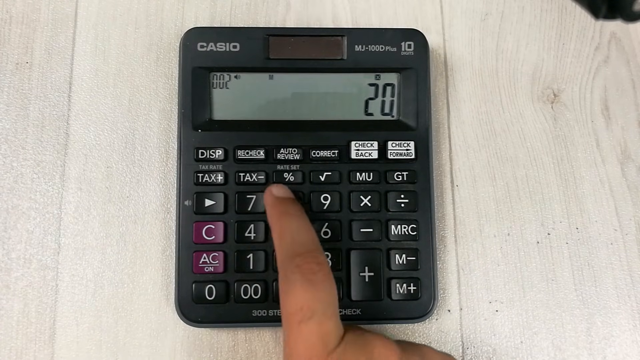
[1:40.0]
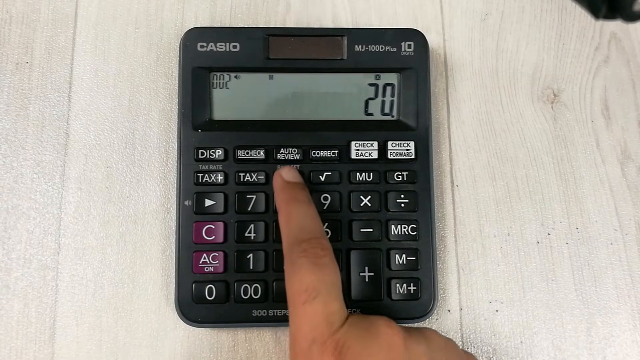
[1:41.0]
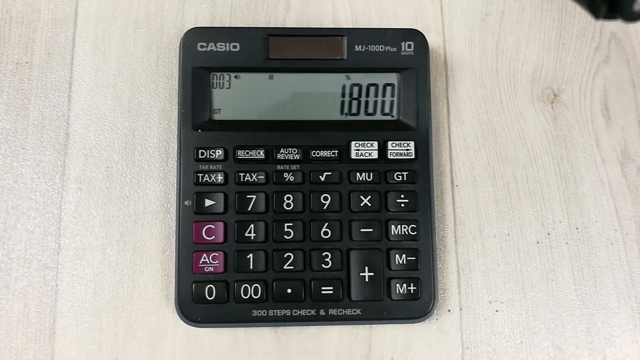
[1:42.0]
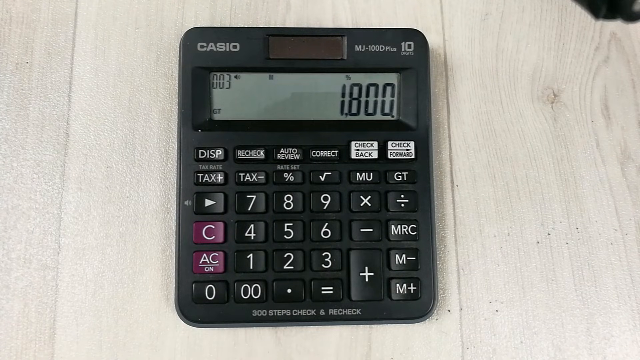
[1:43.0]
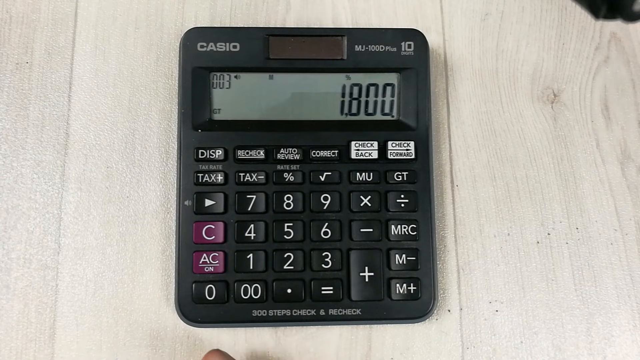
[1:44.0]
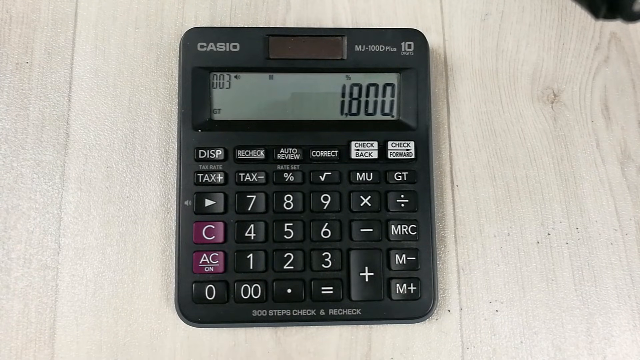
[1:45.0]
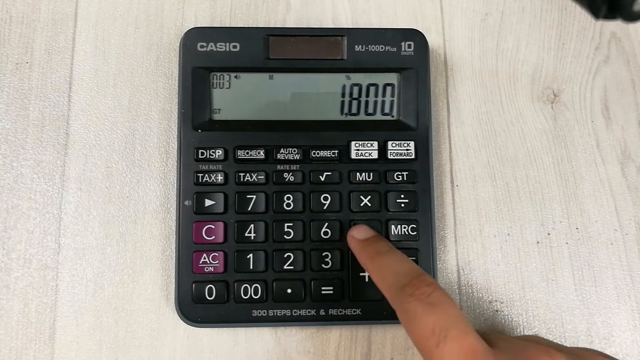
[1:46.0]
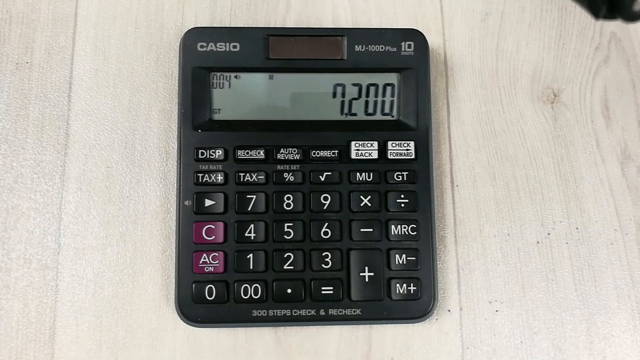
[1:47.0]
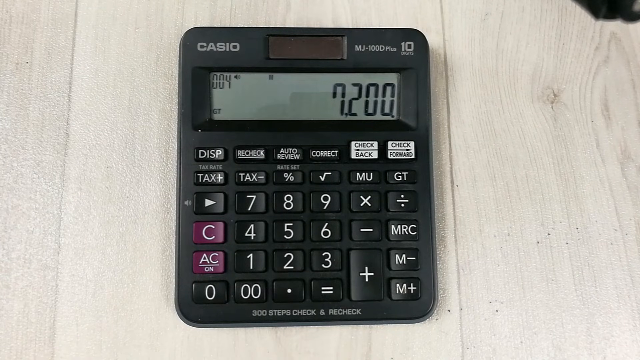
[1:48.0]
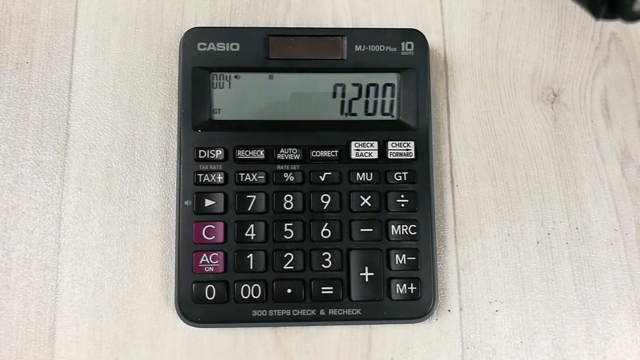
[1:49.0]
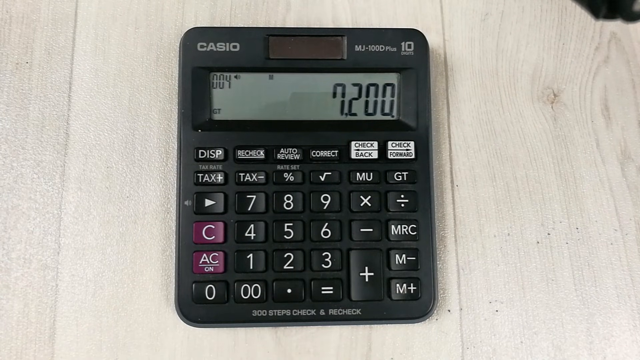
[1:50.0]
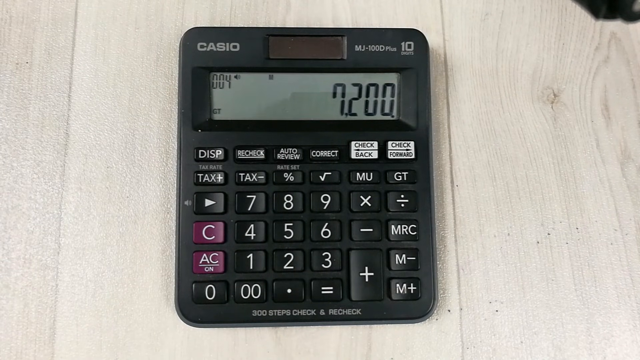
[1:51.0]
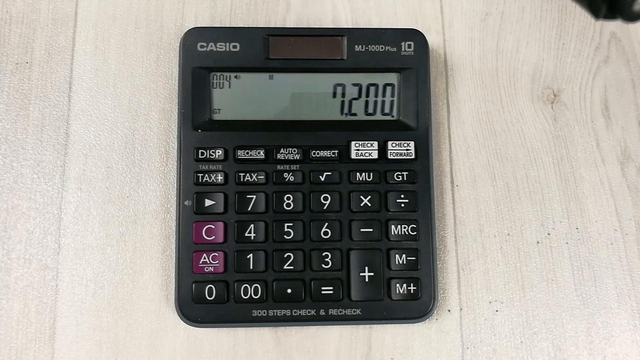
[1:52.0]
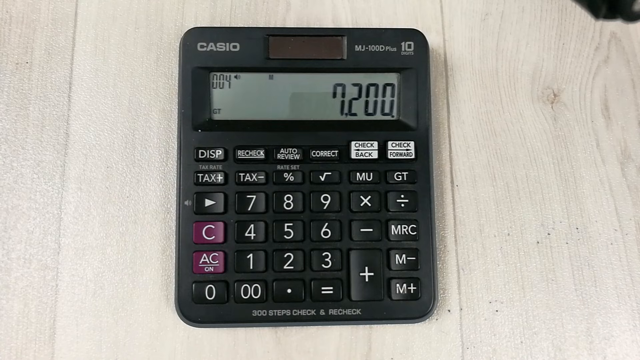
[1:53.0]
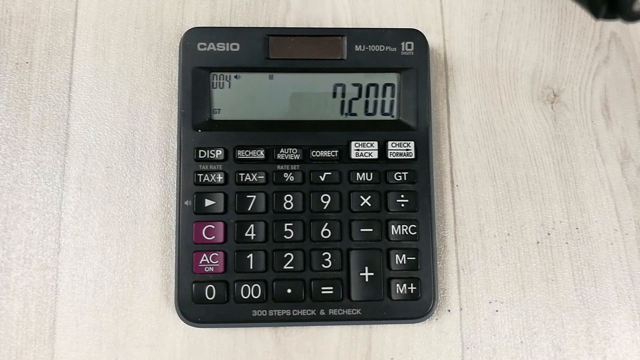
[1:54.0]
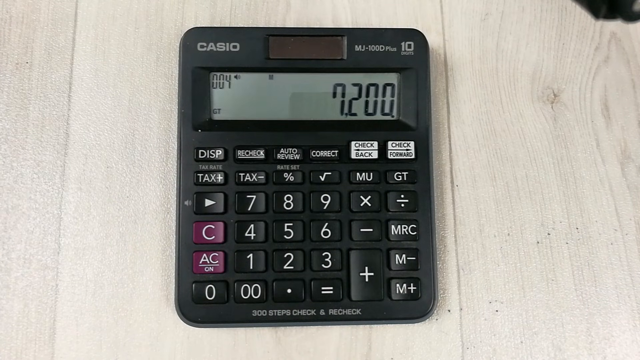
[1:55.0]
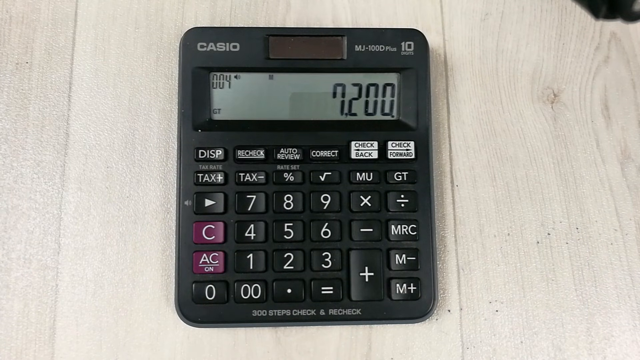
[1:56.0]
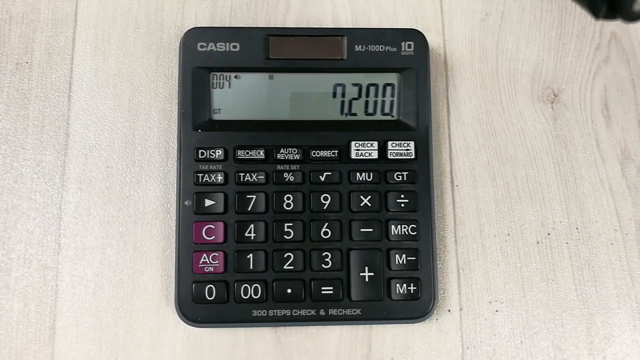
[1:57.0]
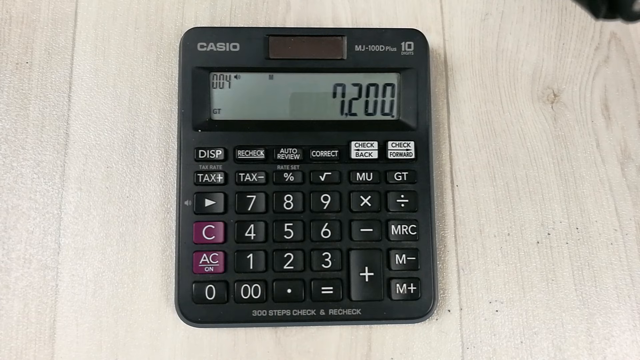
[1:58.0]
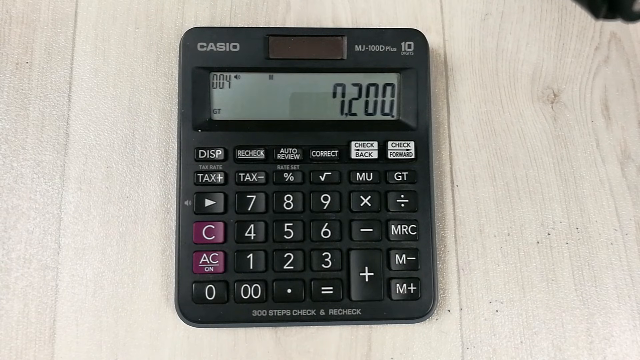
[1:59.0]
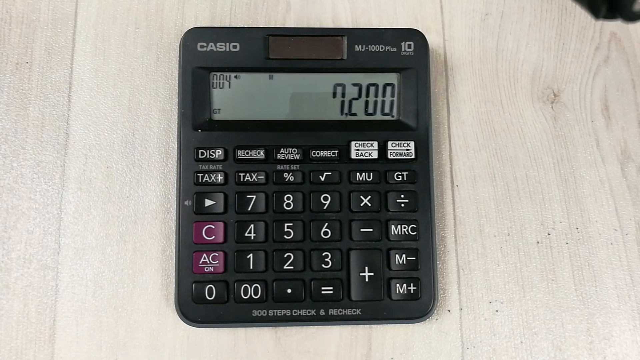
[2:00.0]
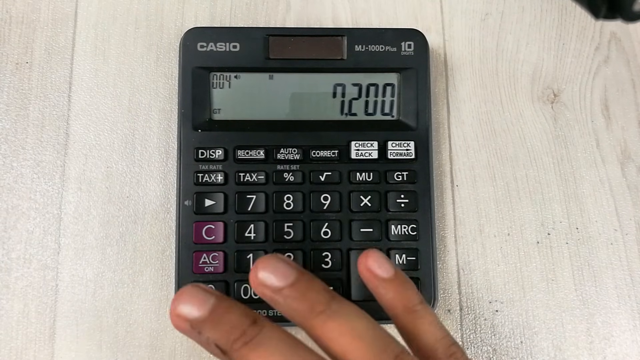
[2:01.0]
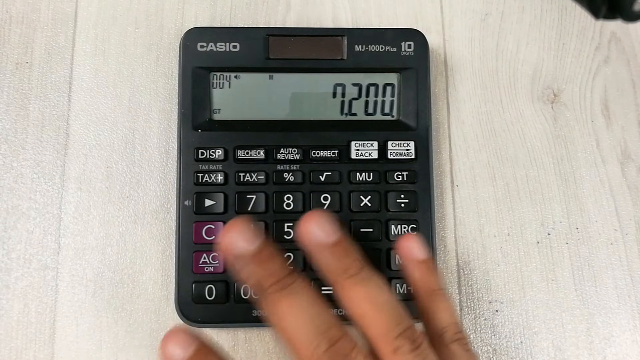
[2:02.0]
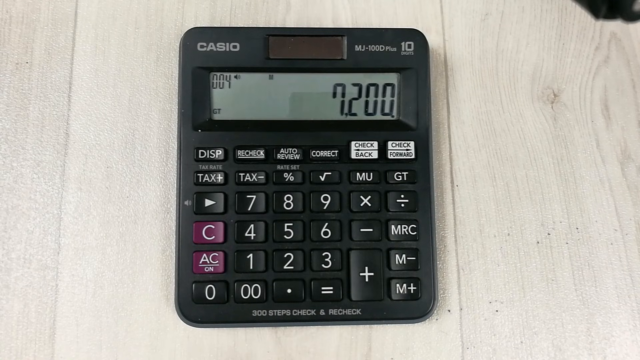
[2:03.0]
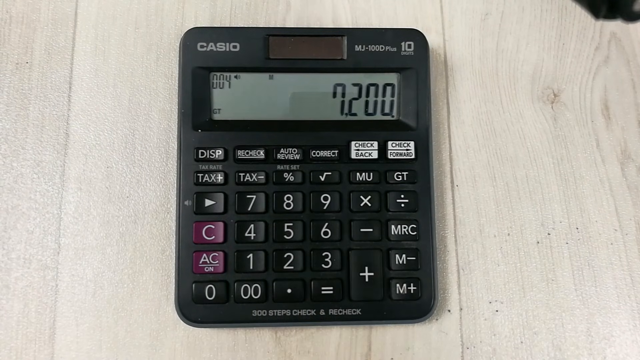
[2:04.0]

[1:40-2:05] The black Casio calculator sits on a white table, and someone's finger hovers over the 8 button. The calculator screen shows 20. The person hits the percent sign that is over the 8 button, and the display changes to 1,800. Using the index finger of their right hand, they hit the subtraction button, which changes the number in the display window to 7,200. For a few seconds only the calculator is in the shot; the person's hands are out of frame and nothing moves. Then the person moves their right hand into the shot, gestures over the calculator, and moves the hand away. The person has tan skin.